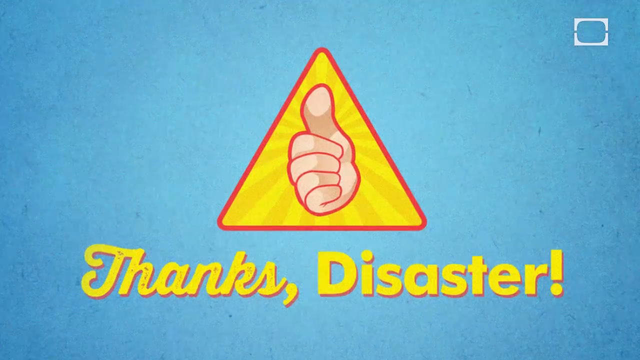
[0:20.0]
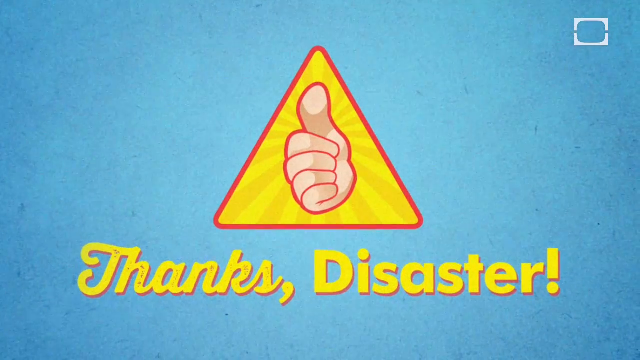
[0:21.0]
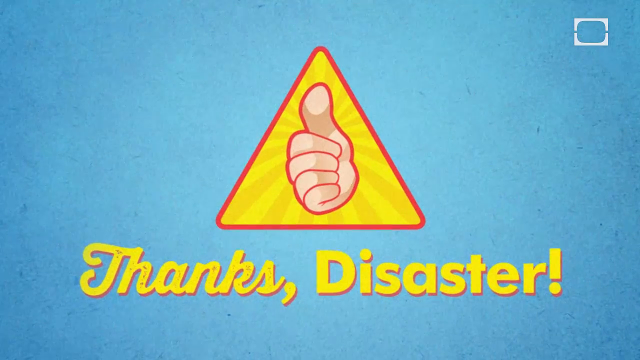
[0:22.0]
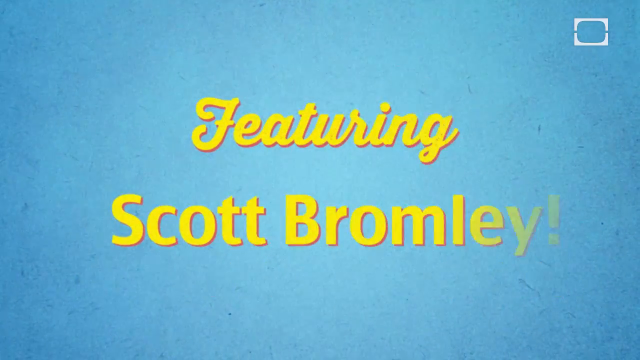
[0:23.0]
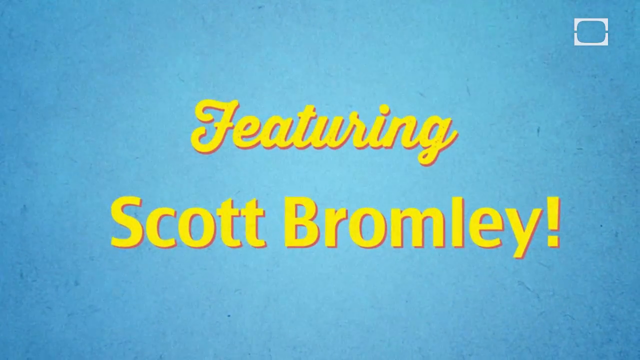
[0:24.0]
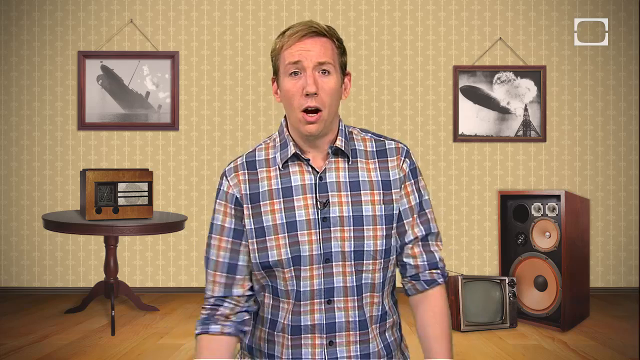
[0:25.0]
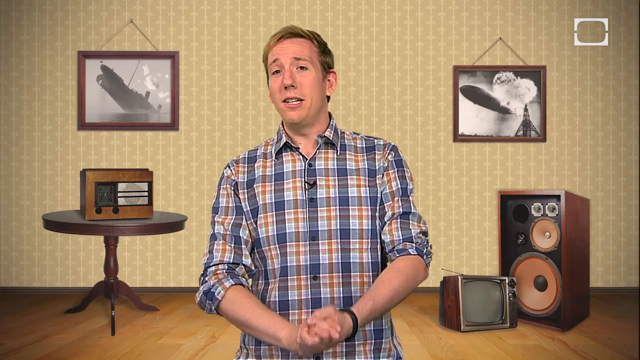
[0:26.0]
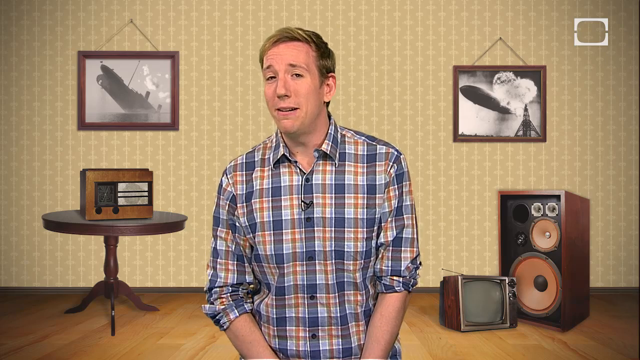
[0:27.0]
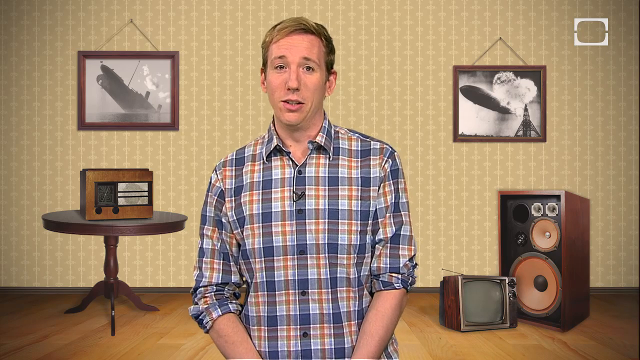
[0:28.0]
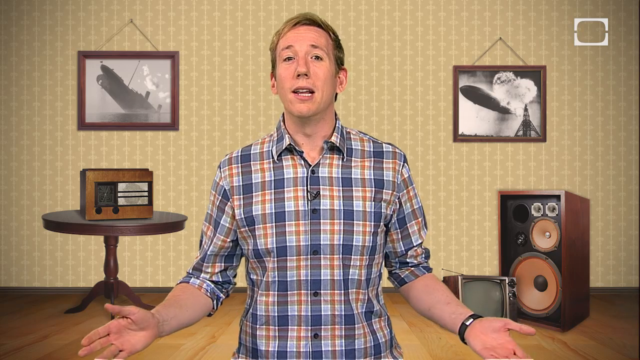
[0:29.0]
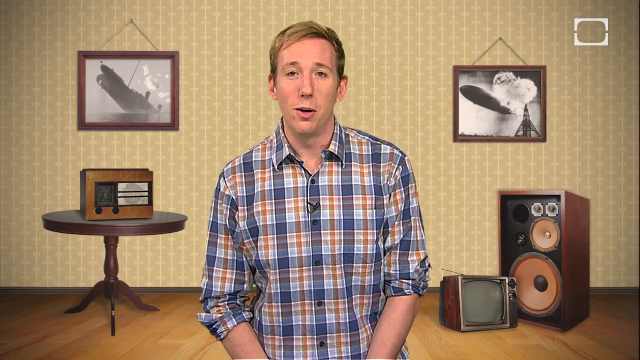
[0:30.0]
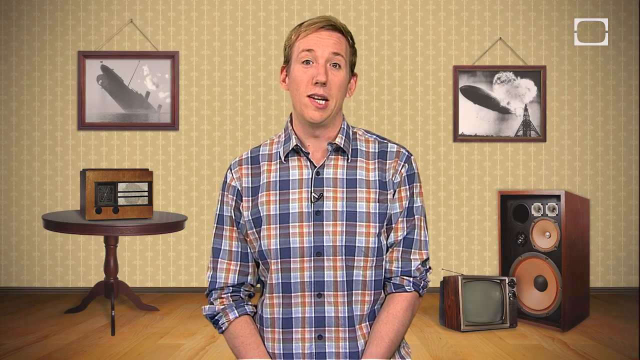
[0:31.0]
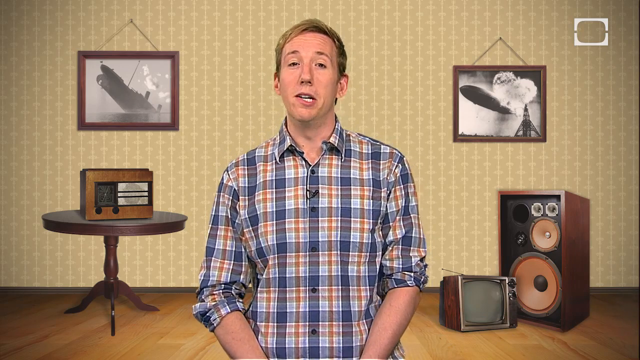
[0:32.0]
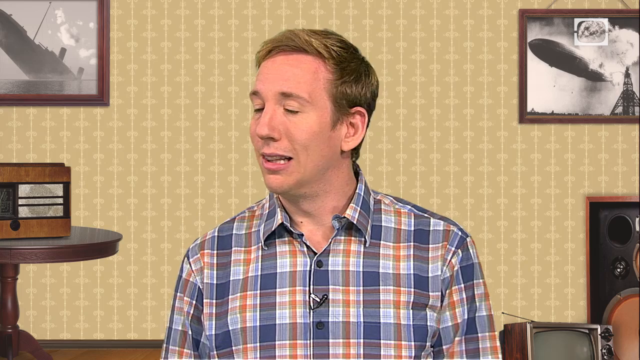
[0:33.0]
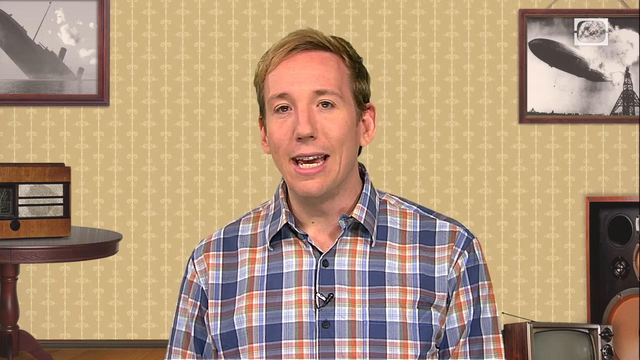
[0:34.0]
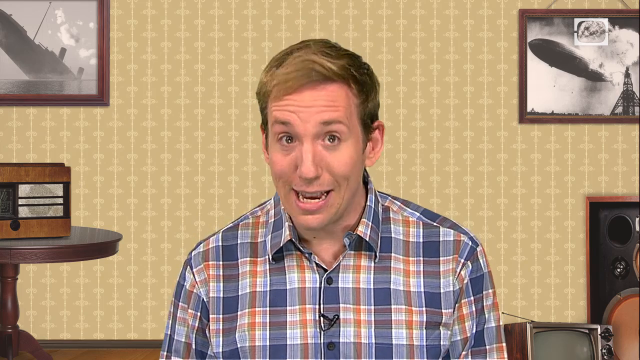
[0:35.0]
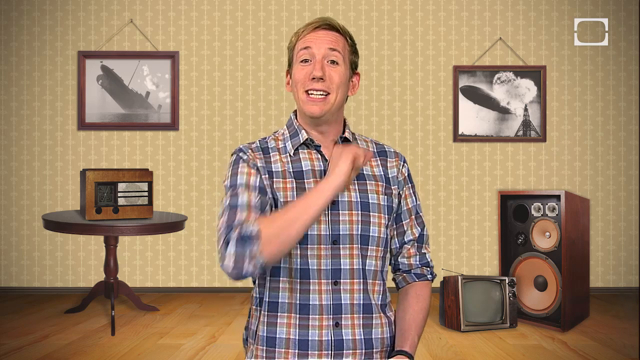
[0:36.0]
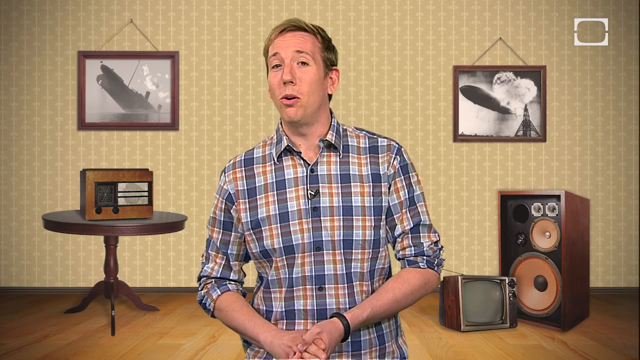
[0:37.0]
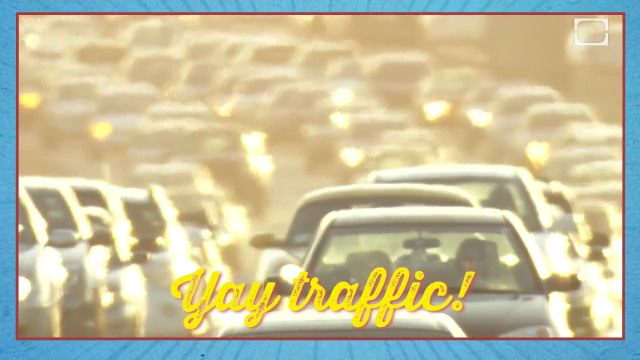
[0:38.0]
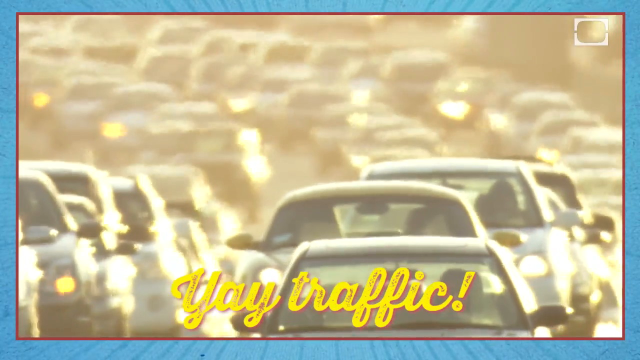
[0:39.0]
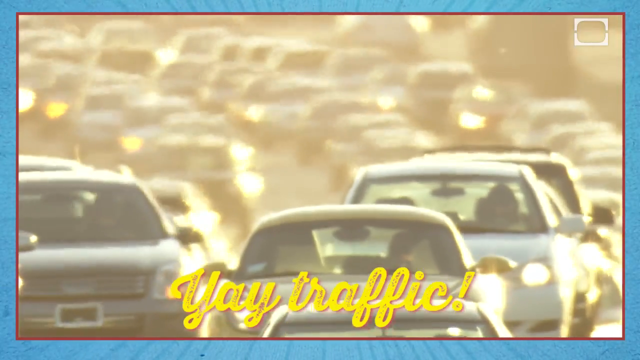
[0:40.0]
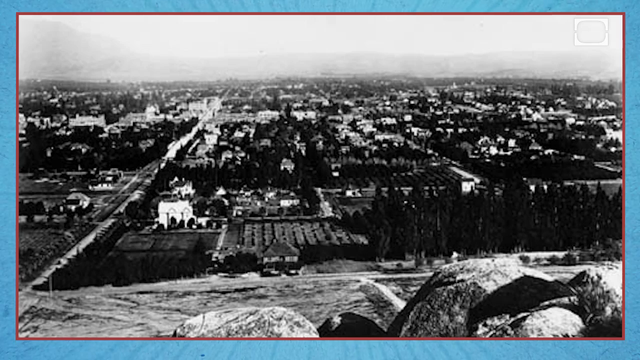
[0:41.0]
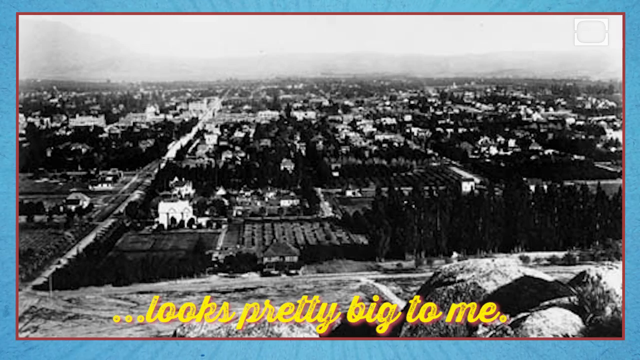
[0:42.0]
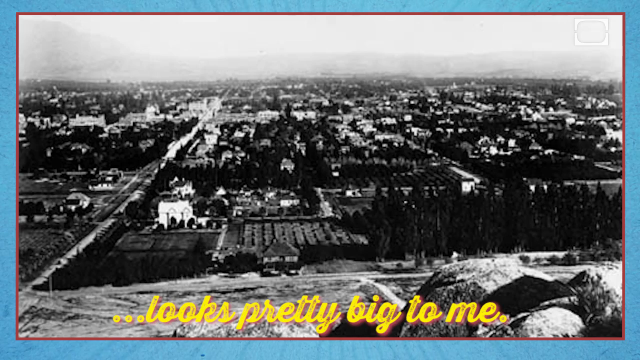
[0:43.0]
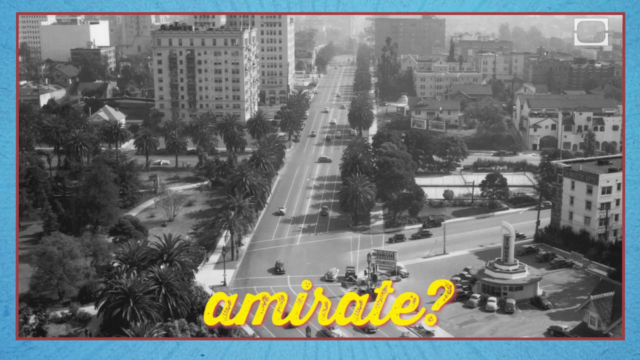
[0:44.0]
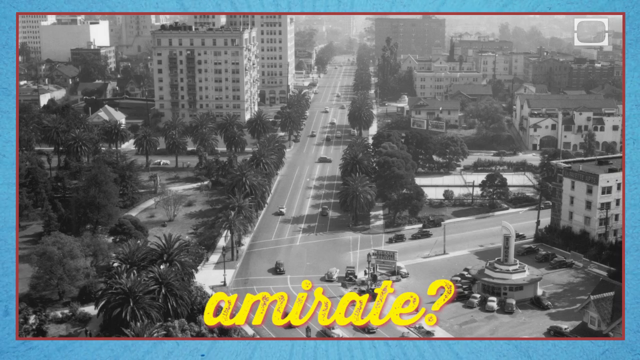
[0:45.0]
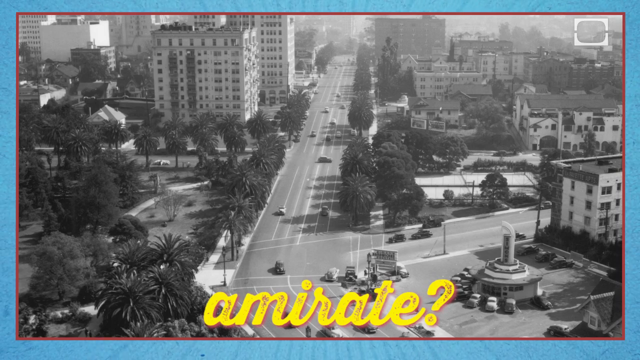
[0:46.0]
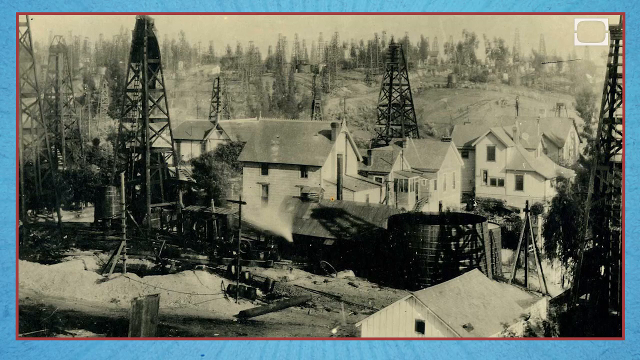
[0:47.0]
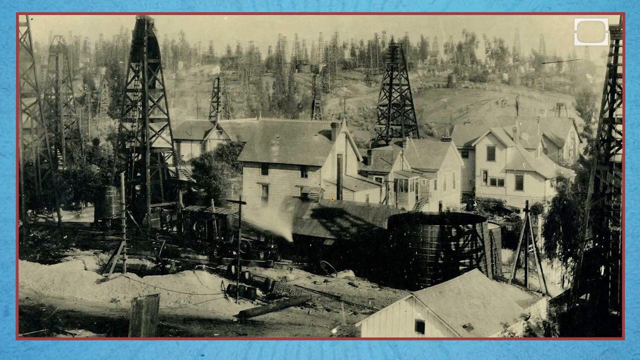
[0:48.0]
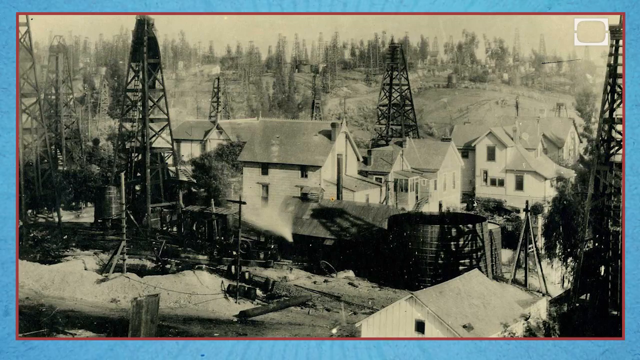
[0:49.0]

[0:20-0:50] At the beginning, "thanks disaster" appears at the bottom in yellow text with a classic, old-timey look. In the middle is a thumbs up made with a left hand, with a triangle shape around it, almost like a caution sign; the triangle is yellow in the middle and has a red outline. After that, more text in the same sort of font reads "featuring Scott Bromley," apparently the man's name. Scott Bromley then appears. He has short dirty blonde hair and wears a vertically striped shirt with thick blue stripes and thin red stripes, as well as some much paler horizontal stripes.